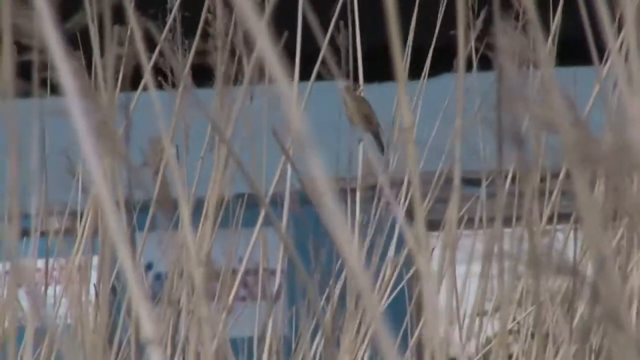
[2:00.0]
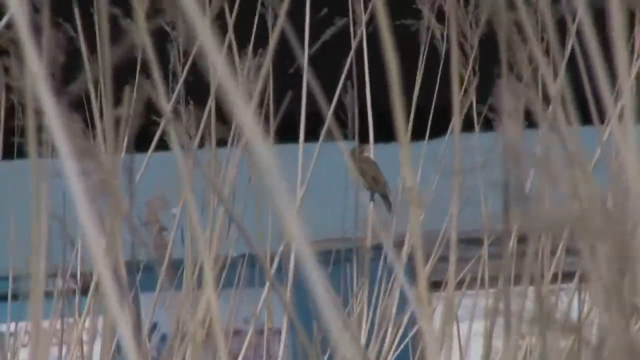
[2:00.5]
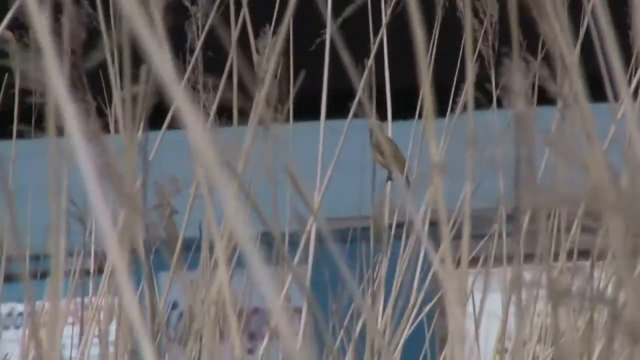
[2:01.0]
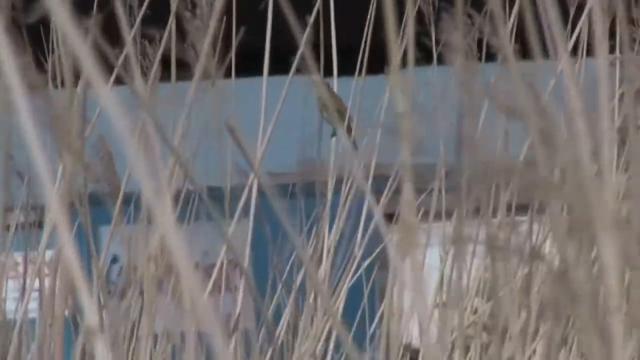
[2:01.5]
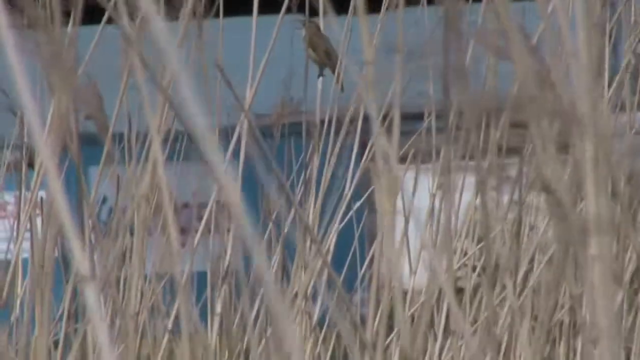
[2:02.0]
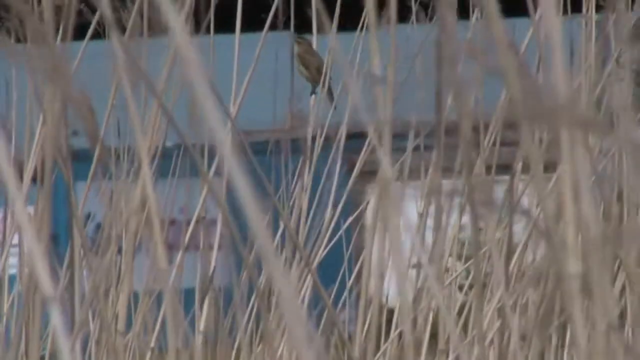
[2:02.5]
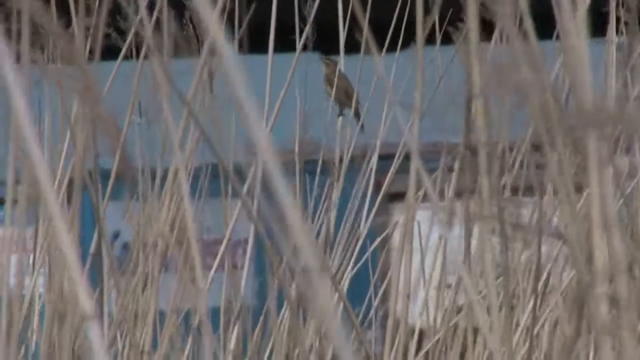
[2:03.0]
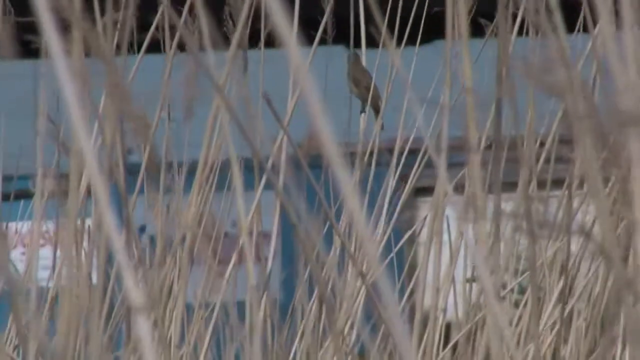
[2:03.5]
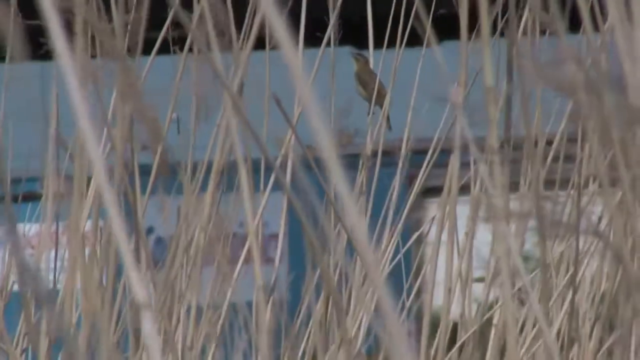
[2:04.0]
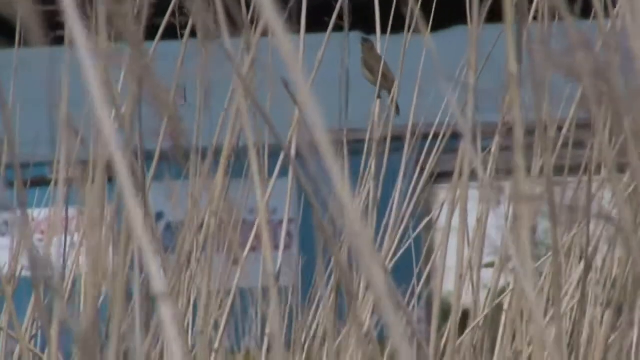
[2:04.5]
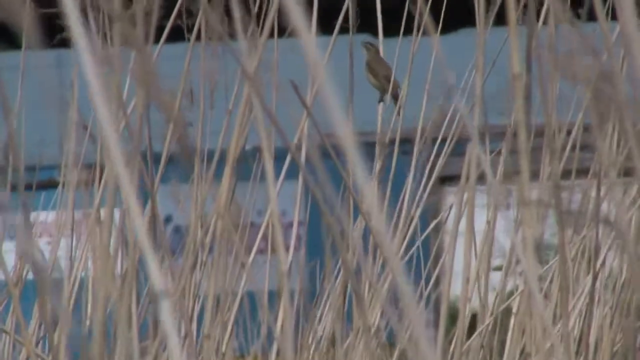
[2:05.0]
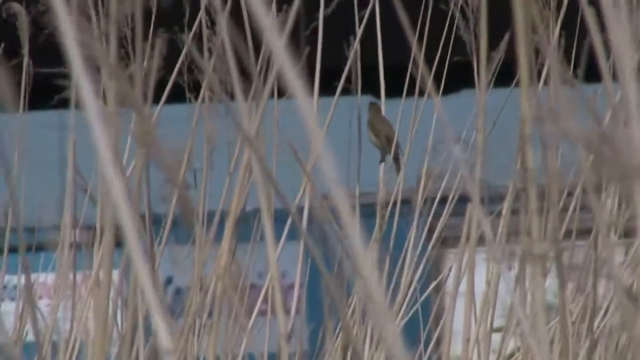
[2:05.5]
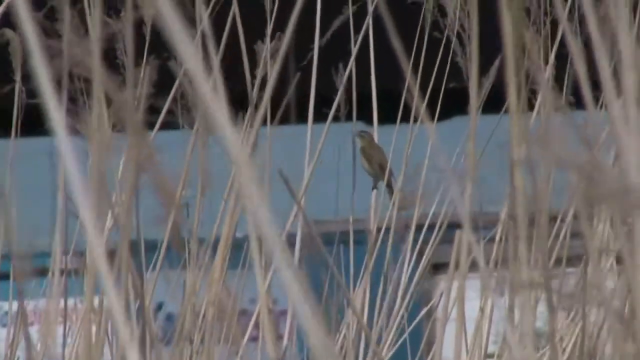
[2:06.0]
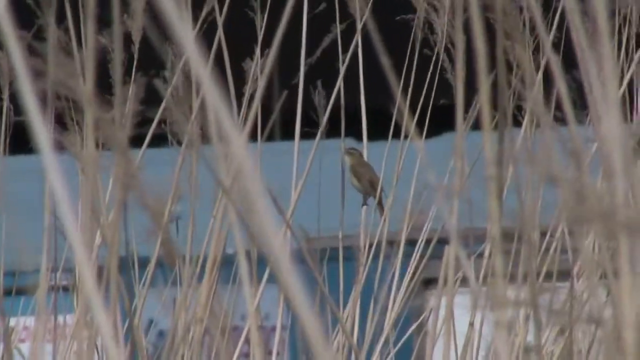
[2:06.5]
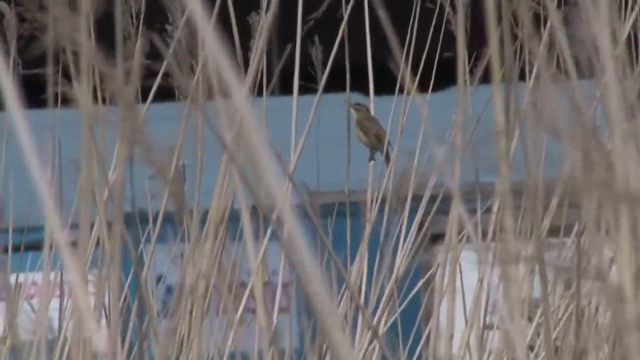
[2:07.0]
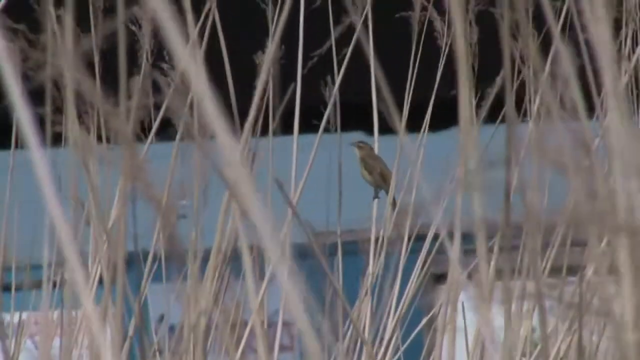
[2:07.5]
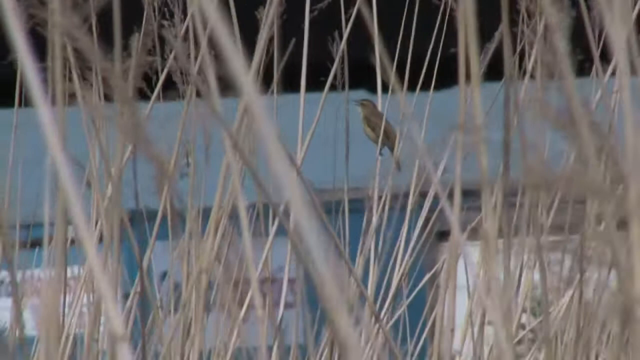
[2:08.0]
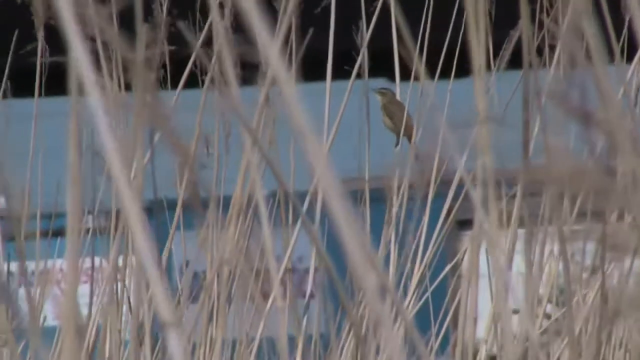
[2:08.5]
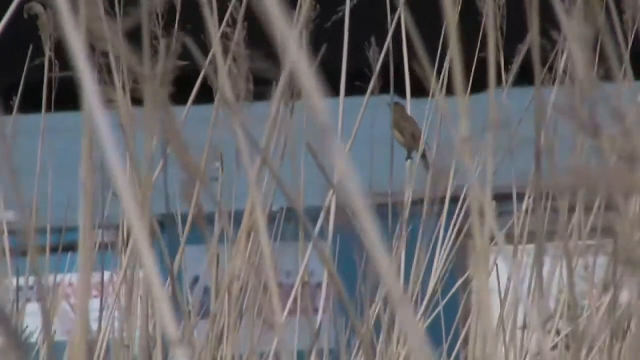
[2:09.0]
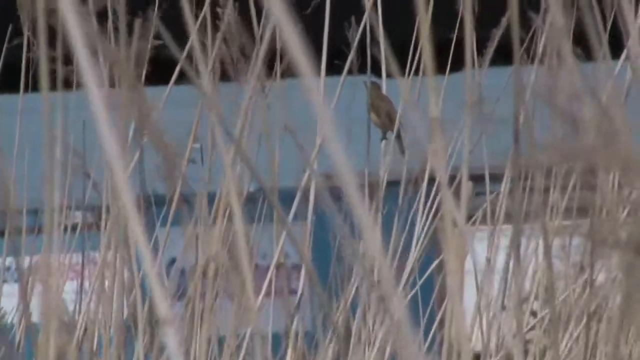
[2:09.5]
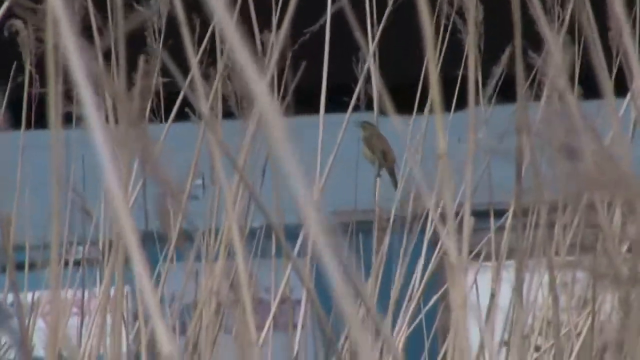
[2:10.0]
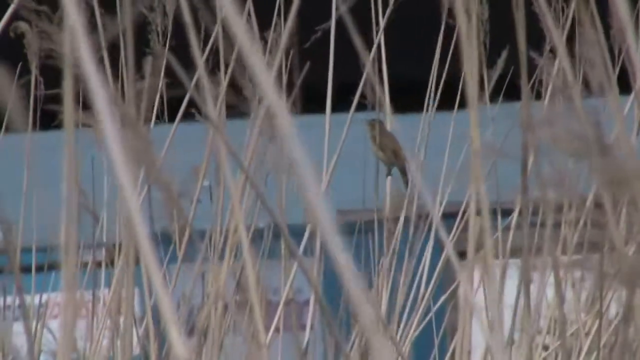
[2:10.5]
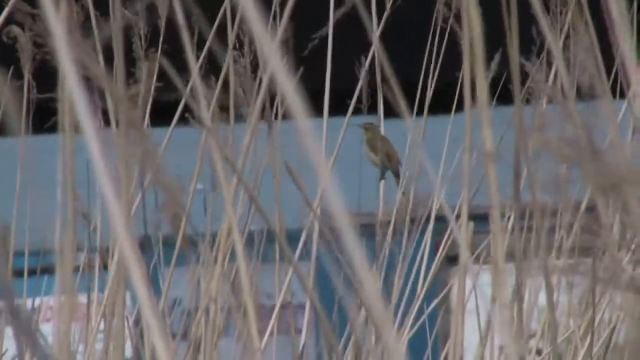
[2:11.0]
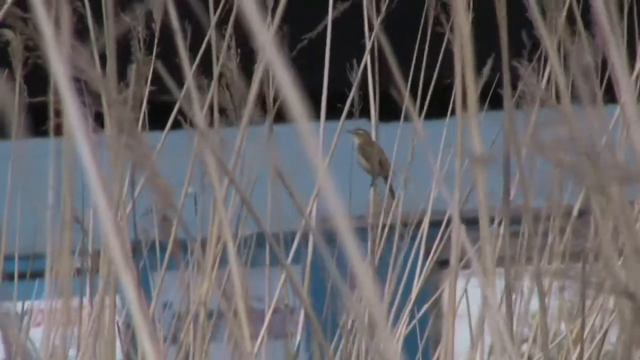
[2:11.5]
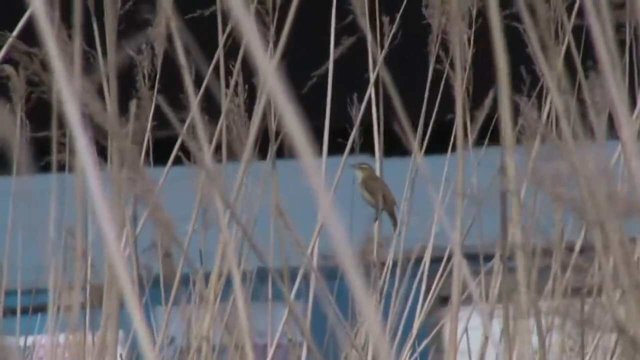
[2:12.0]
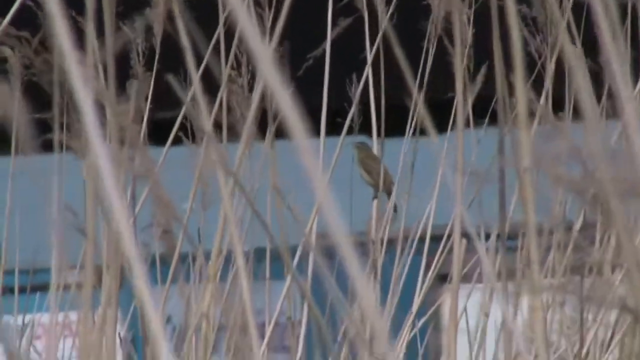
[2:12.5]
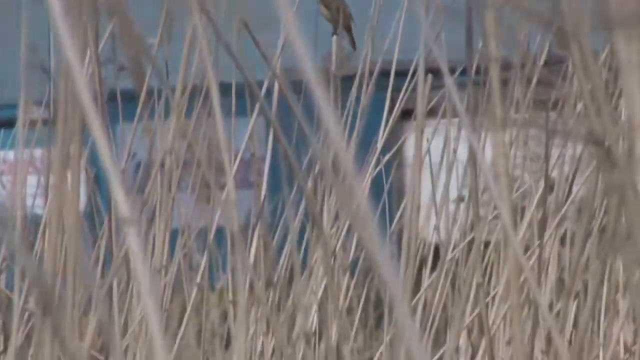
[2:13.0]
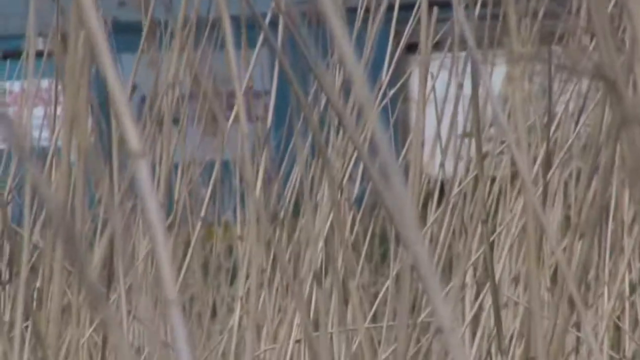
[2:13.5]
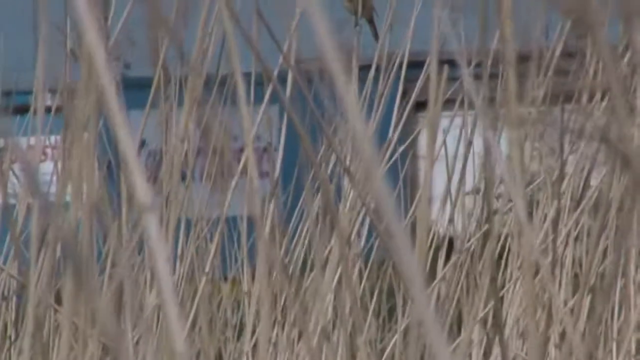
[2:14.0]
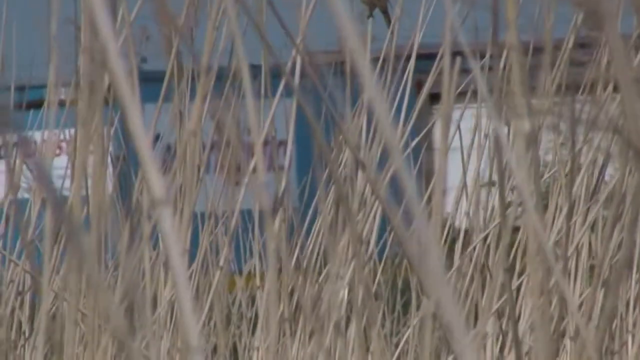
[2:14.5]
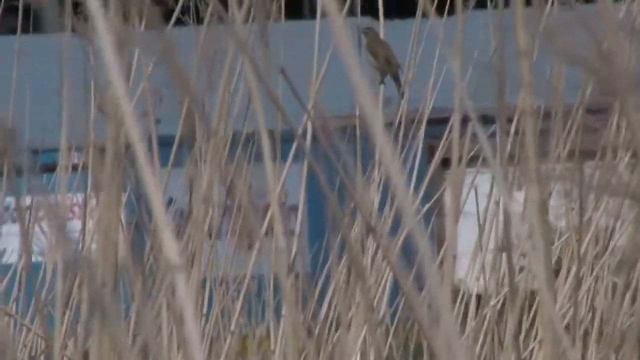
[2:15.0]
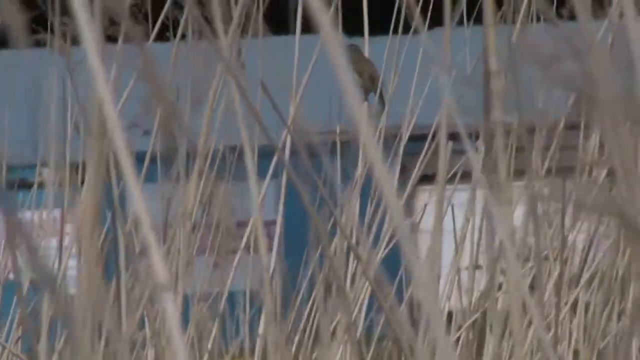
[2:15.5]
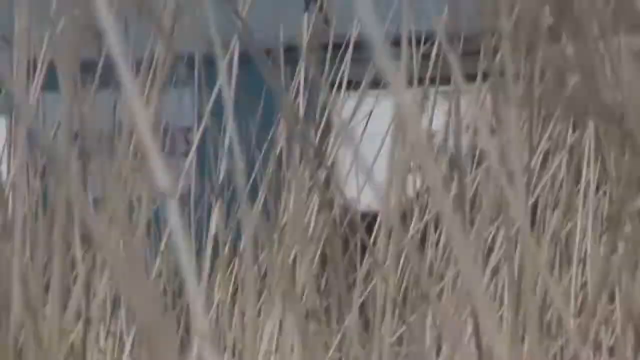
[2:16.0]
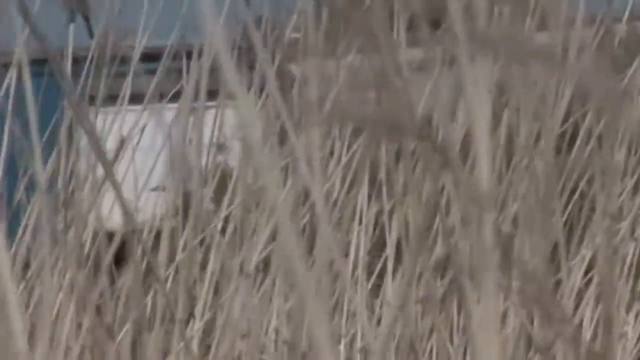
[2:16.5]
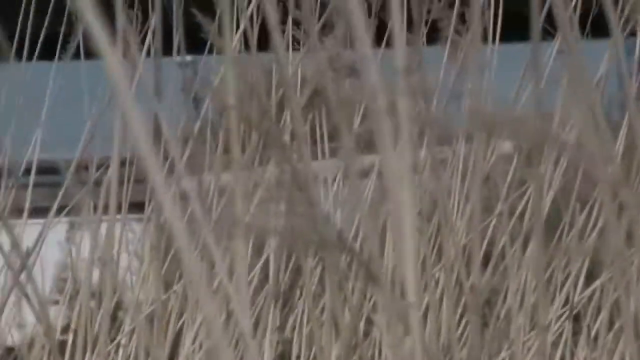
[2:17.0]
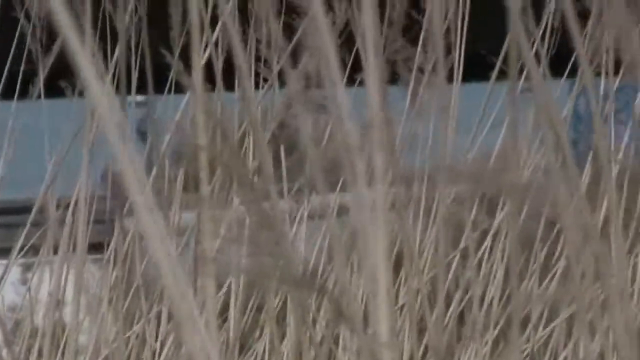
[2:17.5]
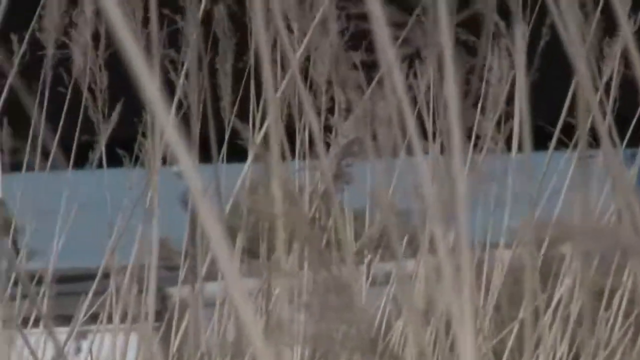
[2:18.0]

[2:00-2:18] A small greyish bird sits attached to a tall reed amongst many tall, dry, white reeds. The bird is greyish on top with a light white underbelly, and it looks from side to side as the reed moves slightly. In the background appears to be a light blue building with at least three white signs on it, at least two of which have red writing; it is not clear what the writing says. The video returns to the bird sitting in the reed, looking from side to side and not really moving. The reed occasionally moves under the bird's weight, and the other reed moves slightly in the wind. The camera then moves away from the bird and looks into the dry reeds, which are very white and very thick. They get thicker as the camera moves to the right, until they are so thick that nothing behind them is visible, including the light blue building seen earlier.